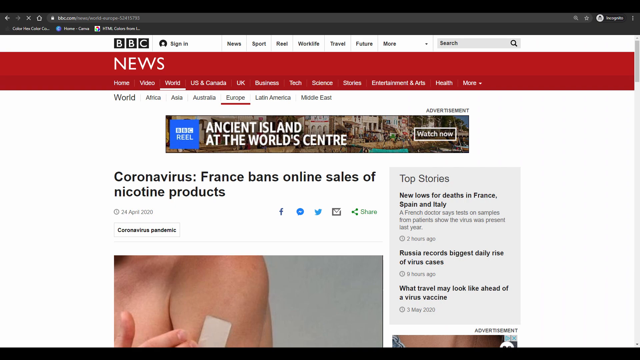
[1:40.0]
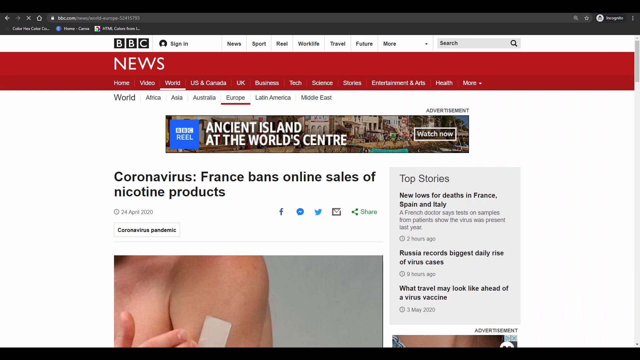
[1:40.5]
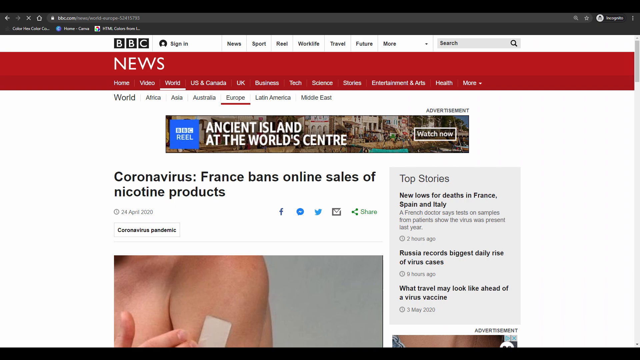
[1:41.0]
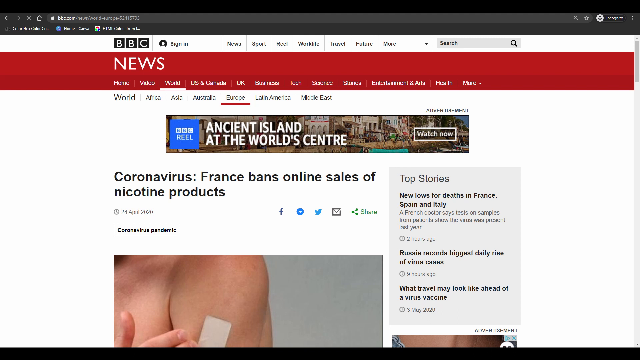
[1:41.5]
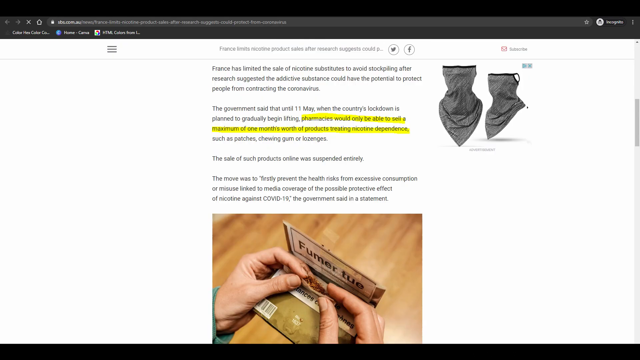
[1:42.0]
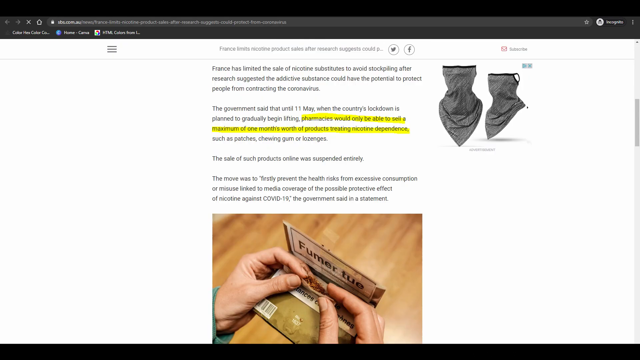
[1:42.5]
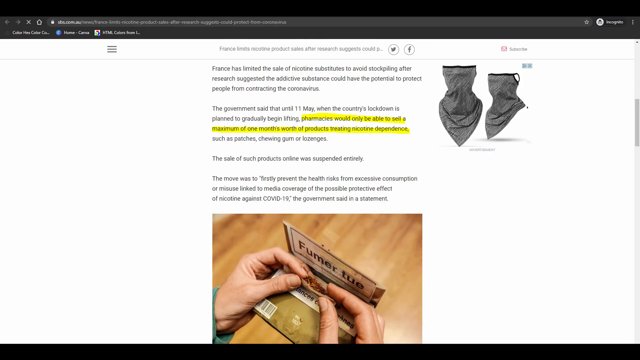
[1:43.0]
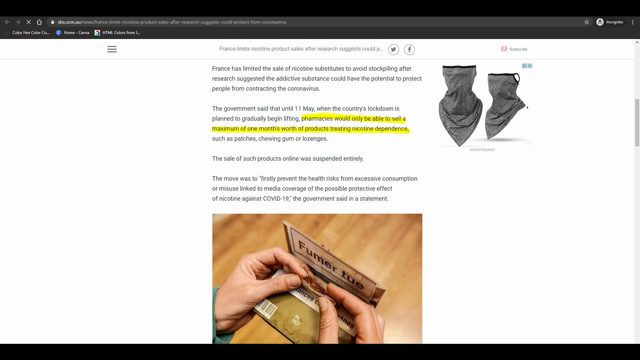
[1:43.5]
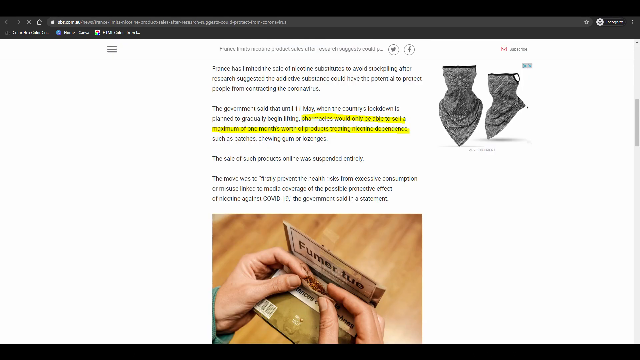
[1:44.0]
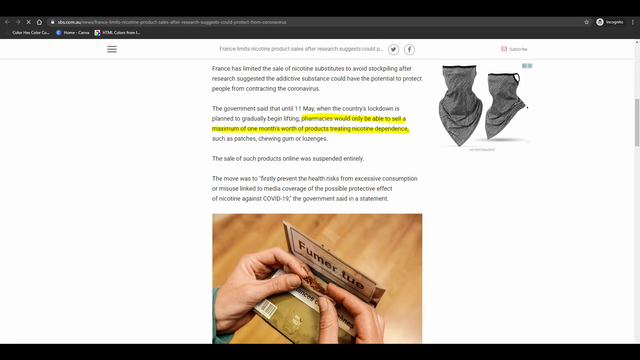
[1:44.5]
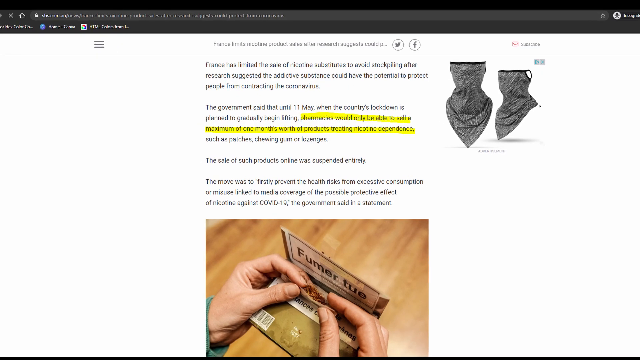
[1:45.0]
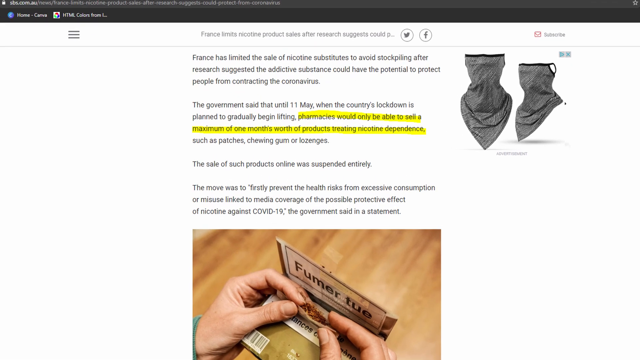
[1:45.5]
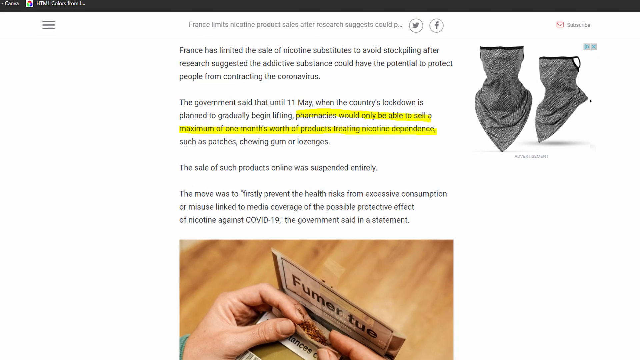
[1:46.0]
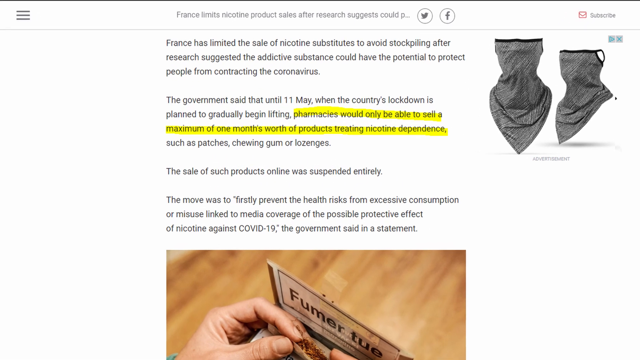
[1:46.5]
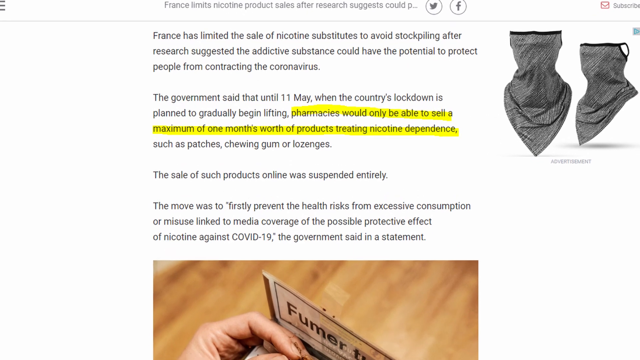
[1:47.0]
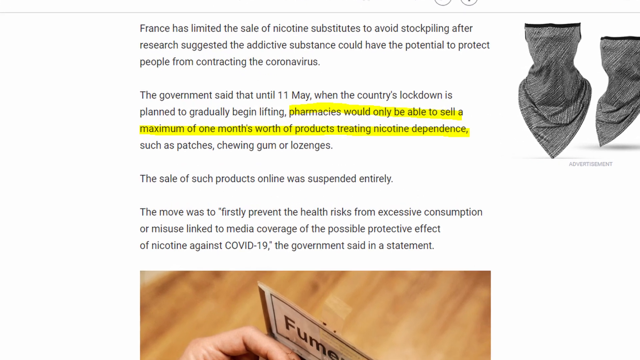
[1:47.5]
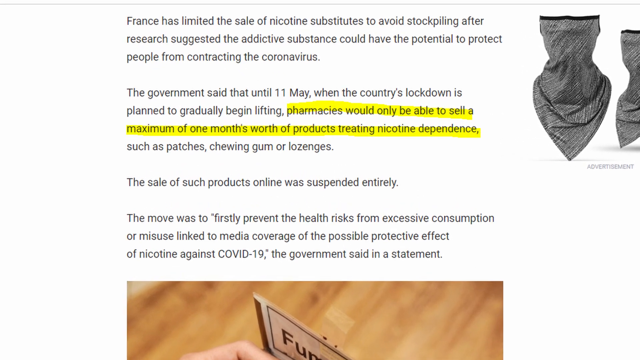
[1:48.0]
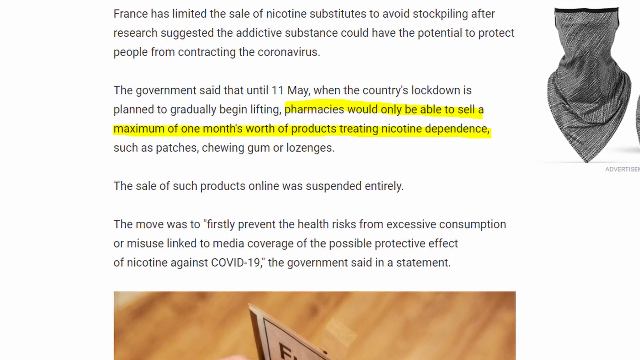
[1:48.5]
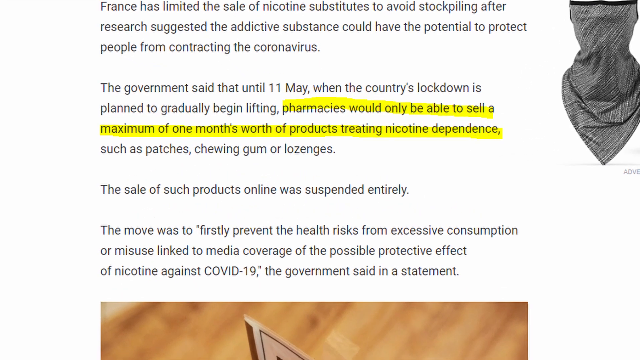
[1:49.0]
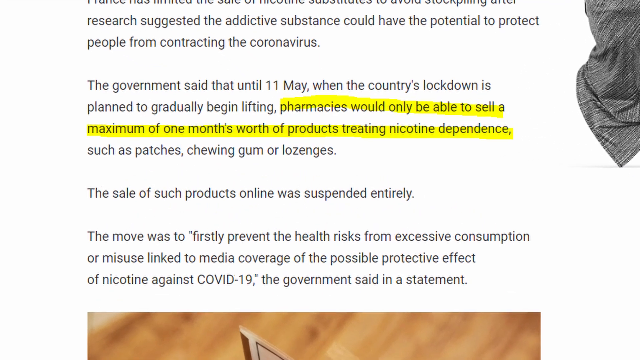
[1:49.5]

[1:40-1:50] A screenshot of the BBC News web page is shown. A banner ad reads "Ancient Island at the World Centre." Below the banner is the title of the article, "Coronavirus, France Bans Online Sales of Nicotine Products," and on the right-hand side a gray column says "Top Stories." The article itself is shown next. On the right-hand side is an illustration of two face masks that also cover the neck. The article begins: "France has limited the sale of nicotine substitutes to avoid stockpiling after research suggested the addictive substance could have the potential to protect people from contracting the coronavirus." Below that, the phrase "pharmacies would only be able to sell a maximum of one month's worth of products treating nicotine dependence" is highlighted in yellow. The camera pans in closer on the highlighted phrase.